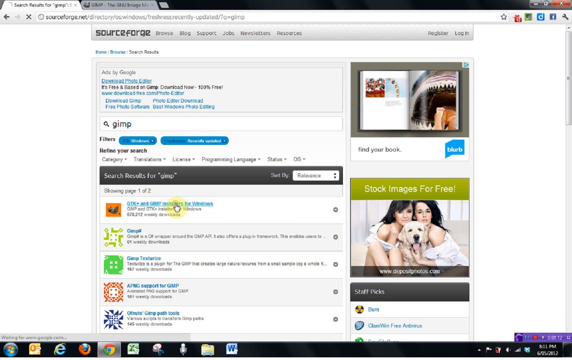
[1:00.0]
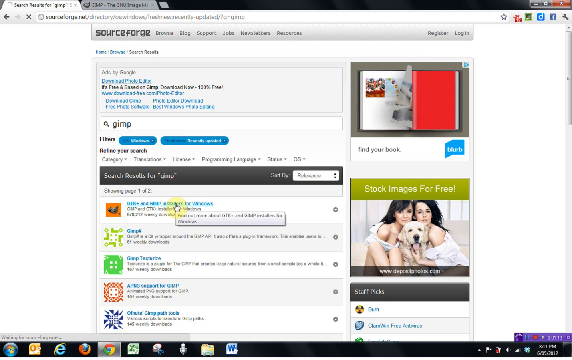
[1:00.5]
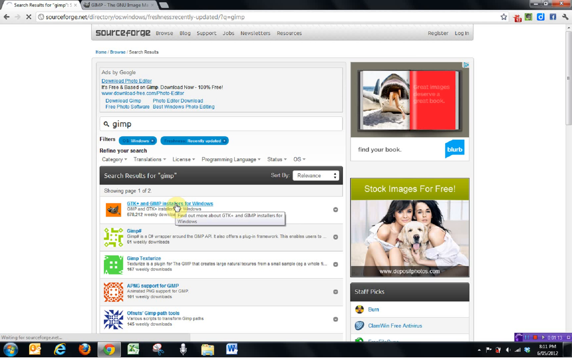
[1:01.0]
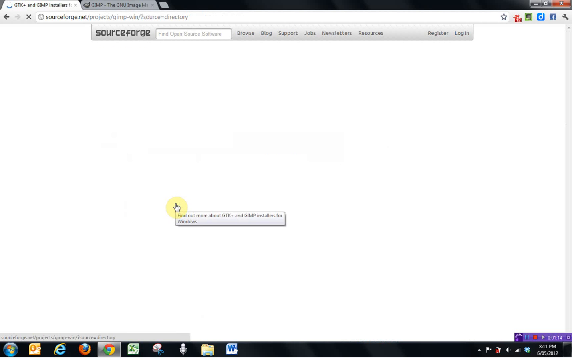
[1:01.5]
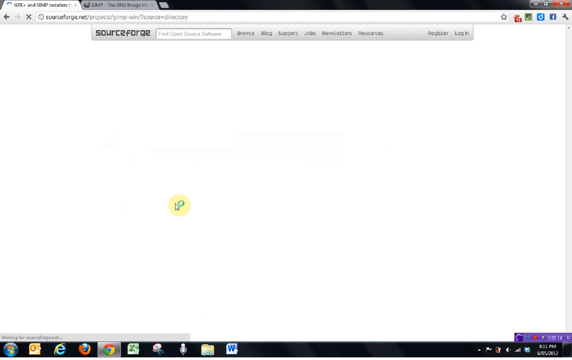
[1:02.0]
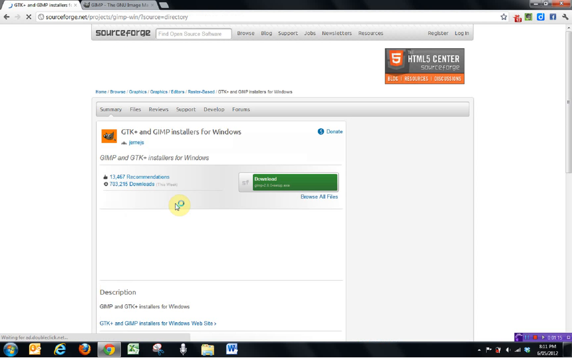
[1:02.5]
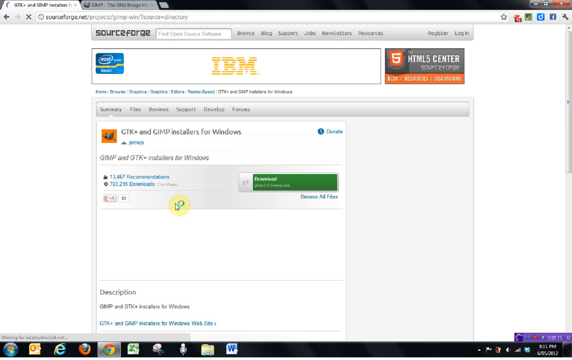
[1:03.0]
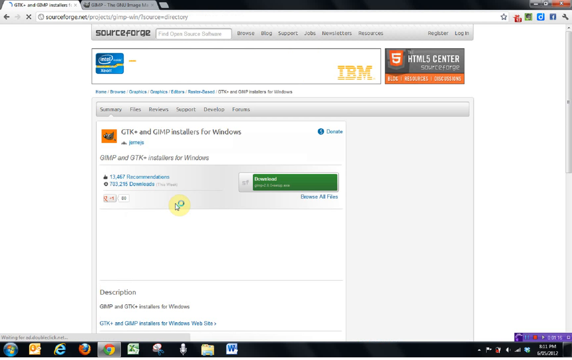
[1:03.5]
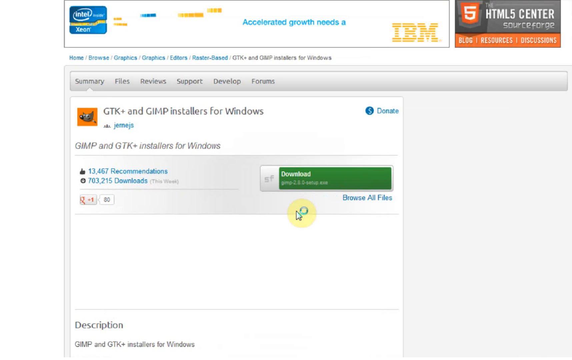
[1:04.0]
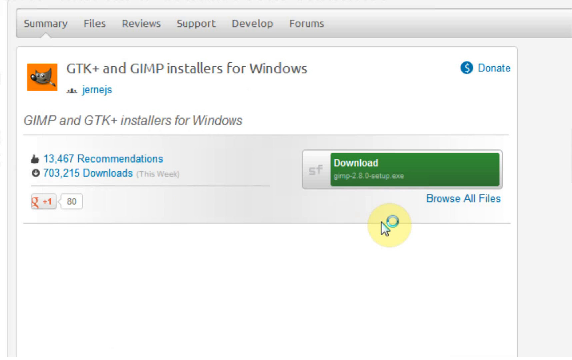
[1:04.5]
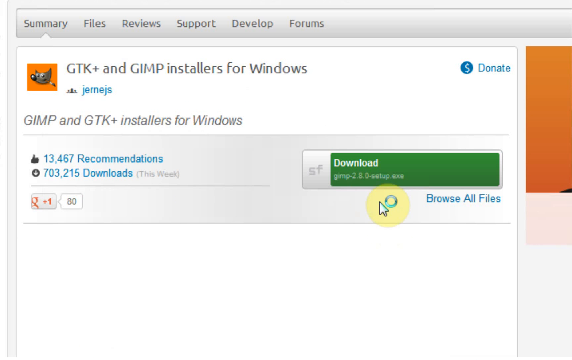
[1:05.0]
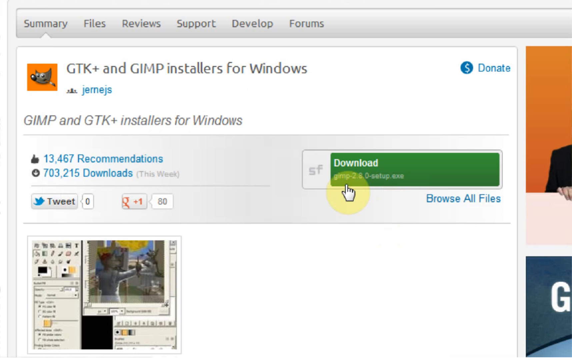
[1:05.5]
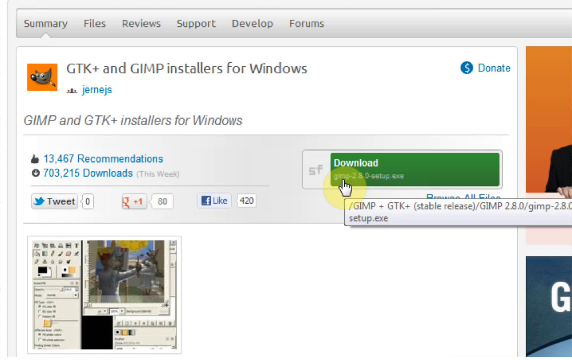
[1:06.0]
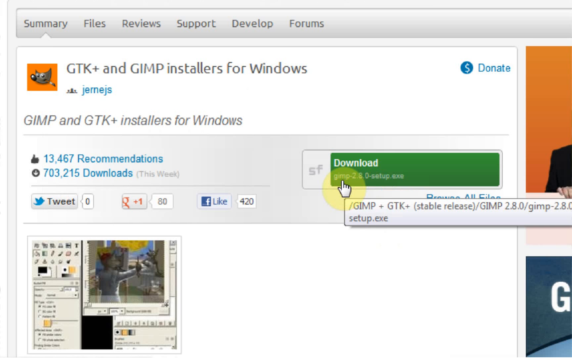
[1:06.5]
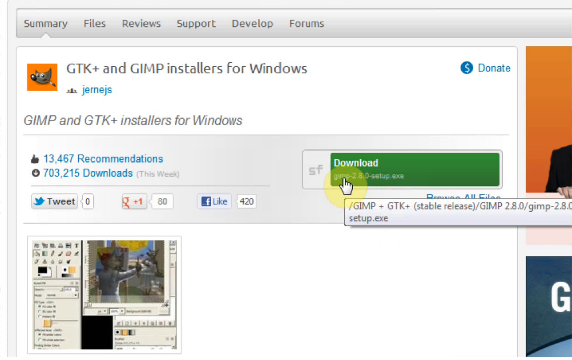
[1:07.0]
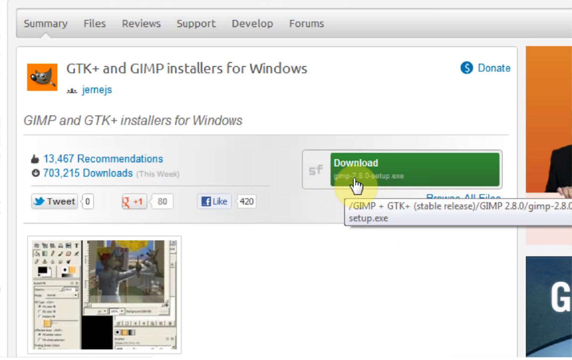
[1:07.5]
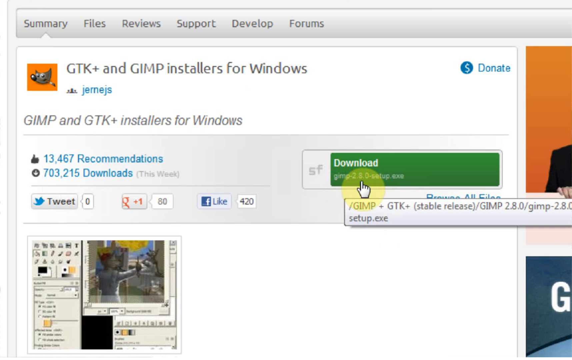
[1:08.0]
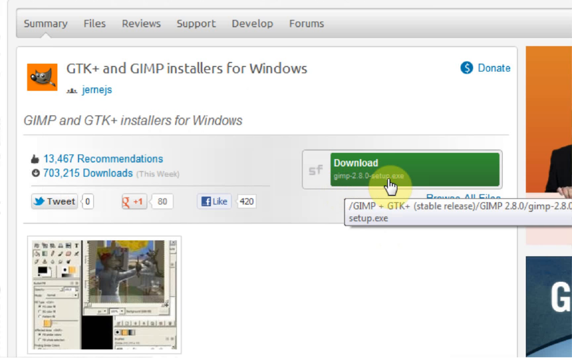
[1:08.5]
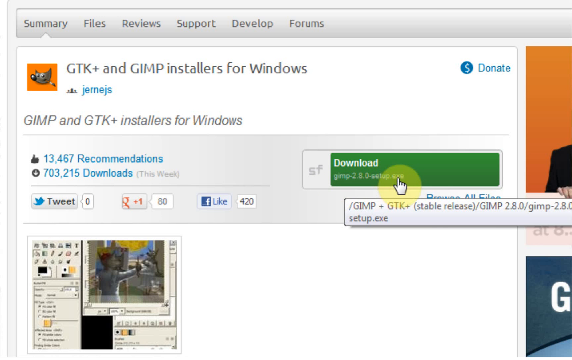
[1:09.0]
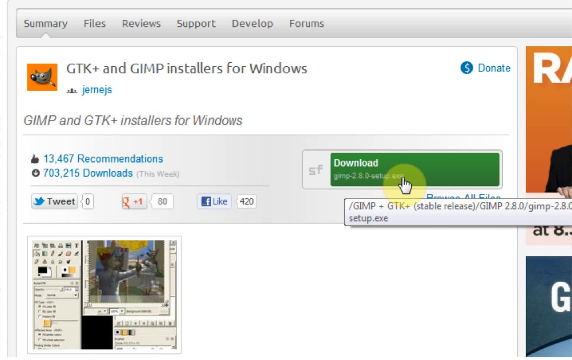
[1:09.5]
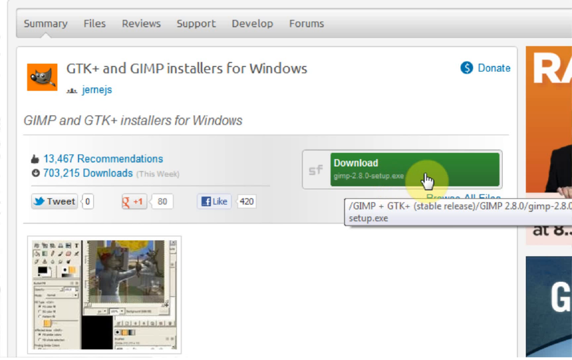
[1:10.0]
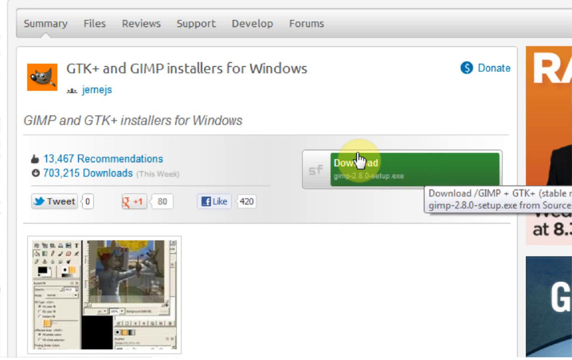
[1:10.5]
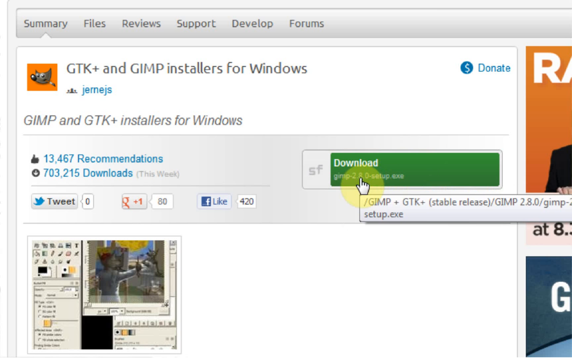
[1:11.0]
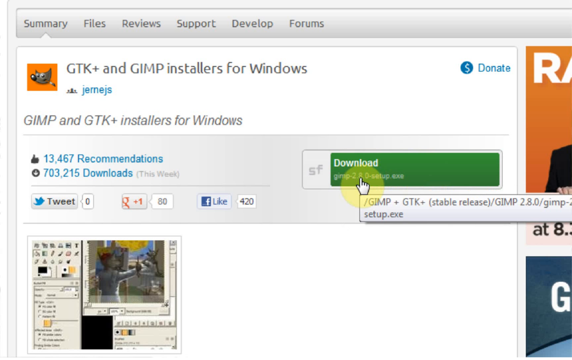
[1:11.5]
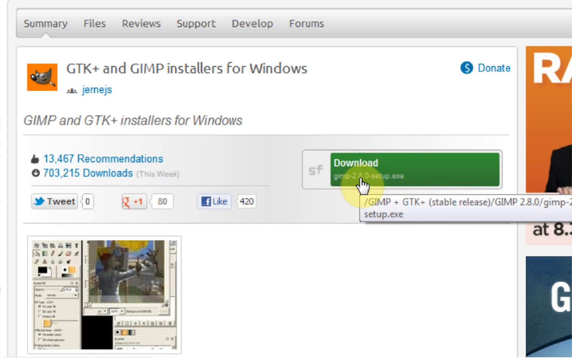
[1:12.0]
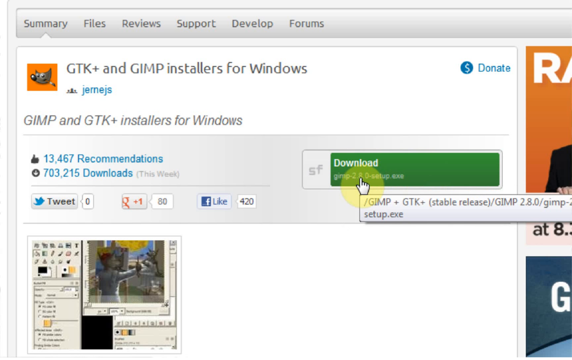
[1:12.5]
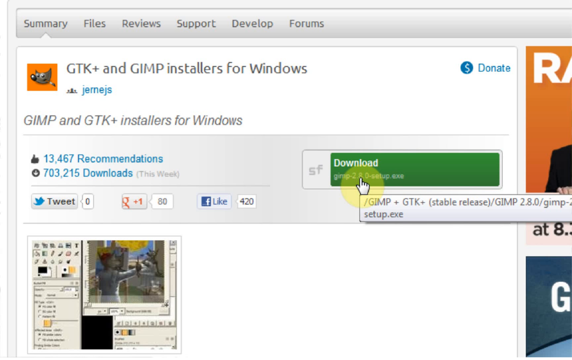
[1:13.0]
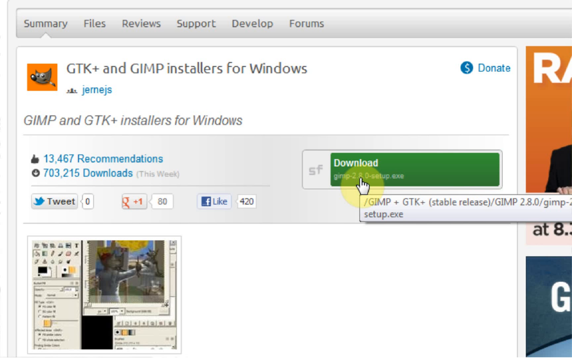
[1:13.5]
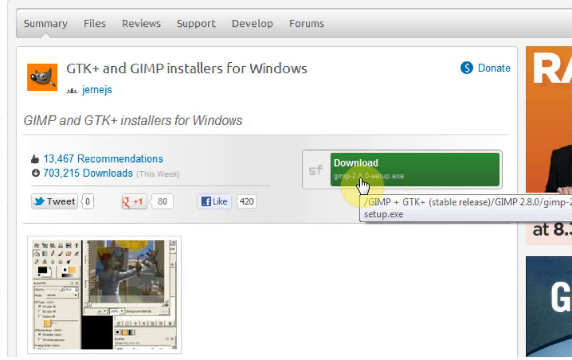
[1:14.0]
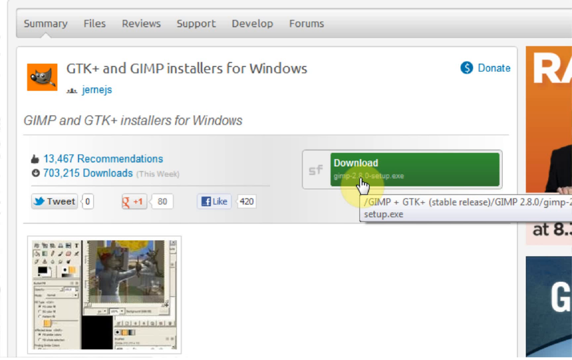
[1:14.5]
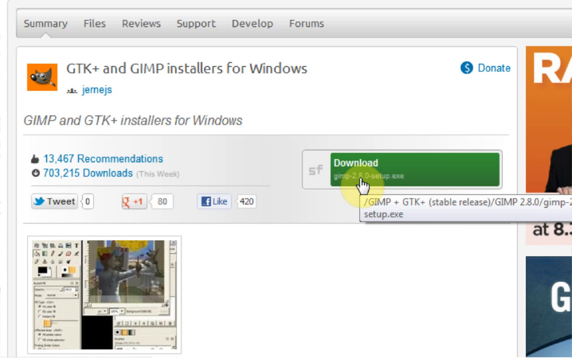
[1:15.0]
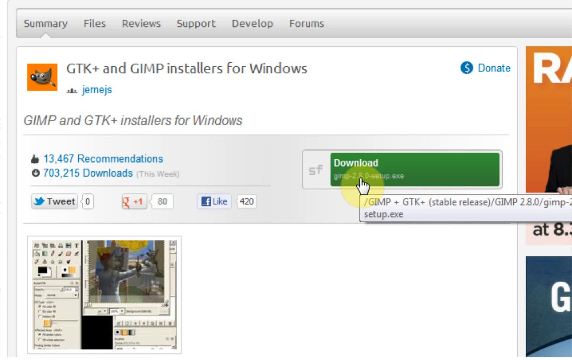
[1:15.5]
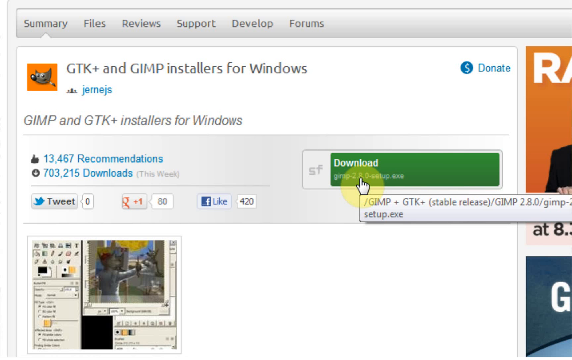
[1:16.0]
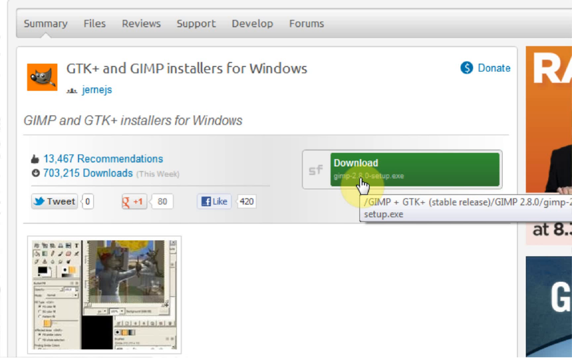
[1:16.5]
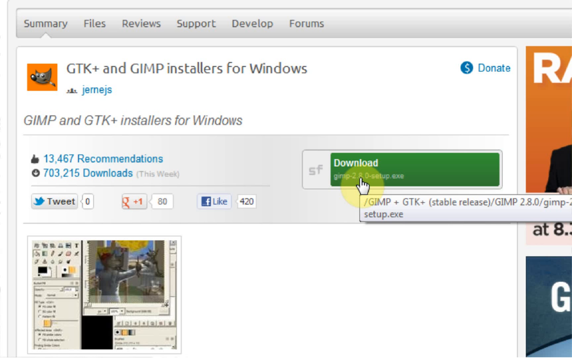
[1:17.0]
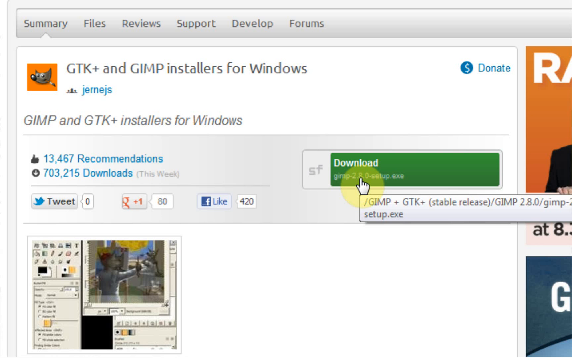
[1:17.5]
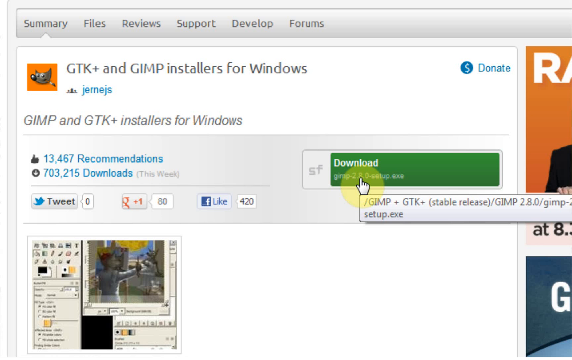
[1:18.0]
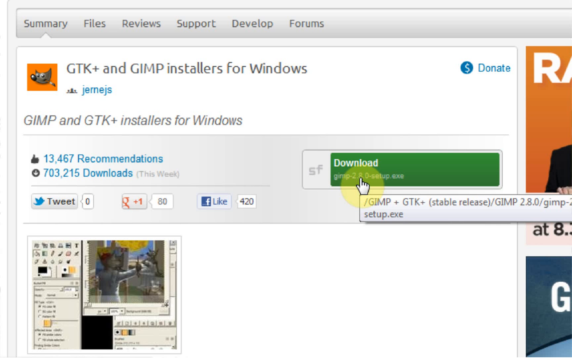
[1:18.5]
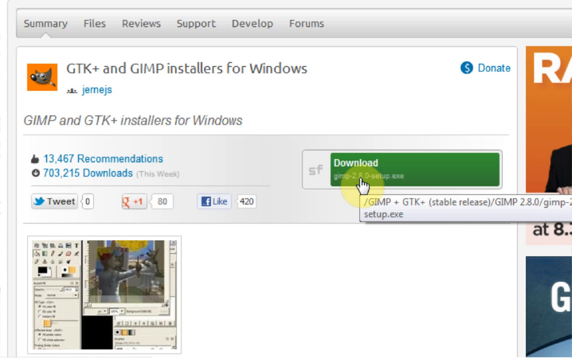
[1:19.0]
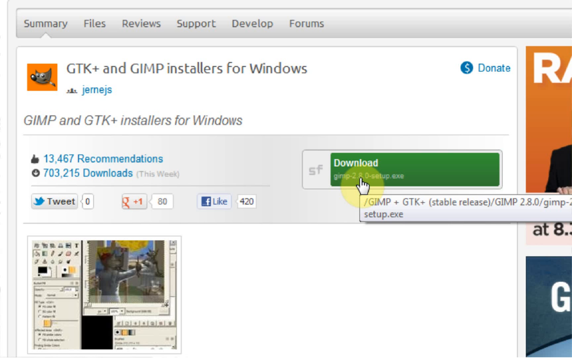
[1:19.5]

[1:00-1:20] Clicking the link brings up the download page, and the view is zoomed in so the text is readable: "GTK+ and GIMP installers for Windows". There is a small orange icon, apparently the program's icon, and a big green download button, along with figures such as "13,467 recommendations" and a downloads count. The cursor moves to the green download button and hovers over it but apparently does not click, and the shot ends frozen on that screen. There are also ads on the page.